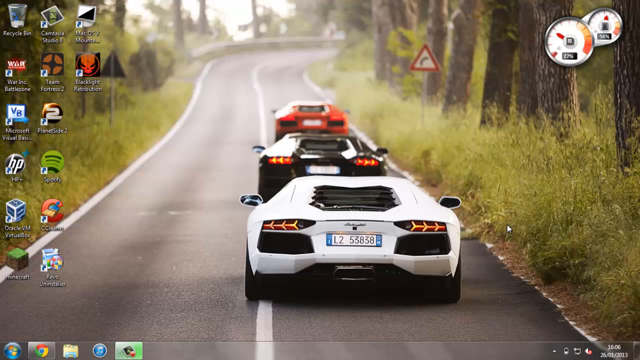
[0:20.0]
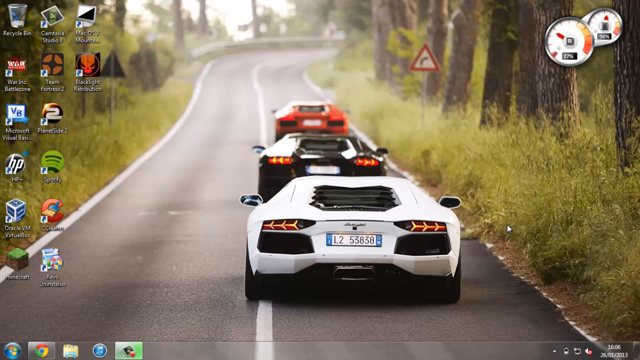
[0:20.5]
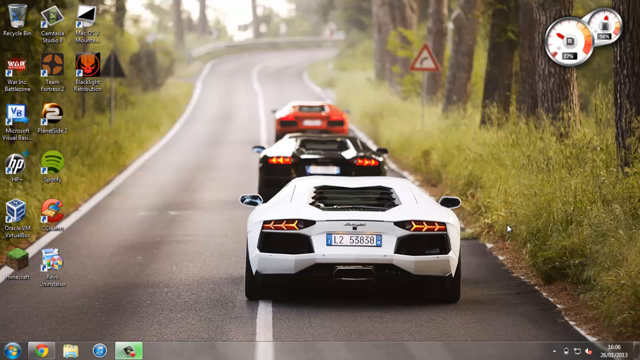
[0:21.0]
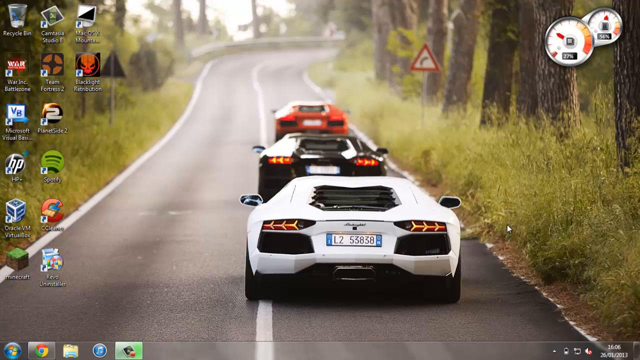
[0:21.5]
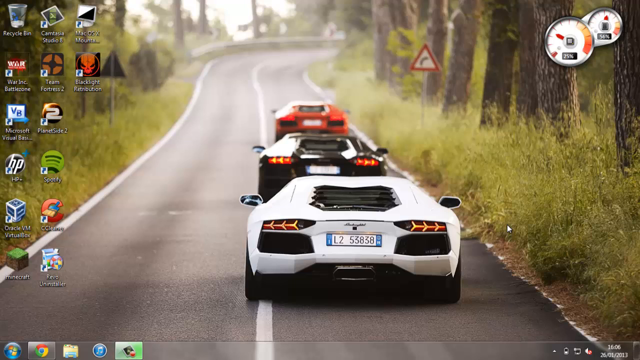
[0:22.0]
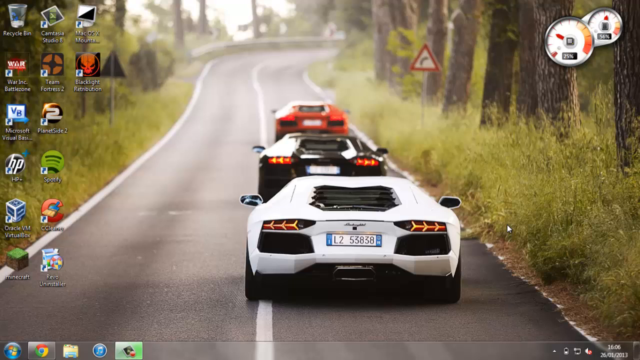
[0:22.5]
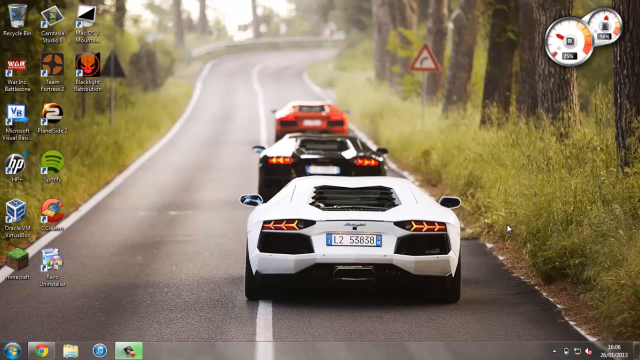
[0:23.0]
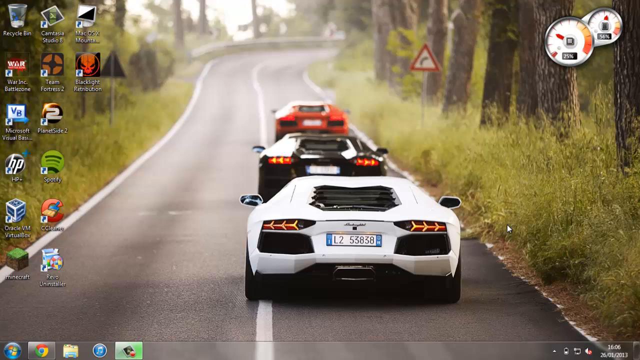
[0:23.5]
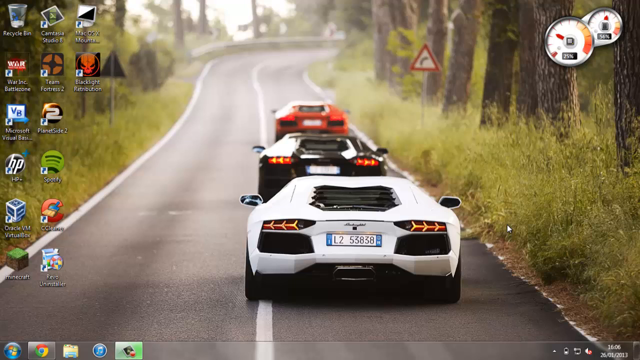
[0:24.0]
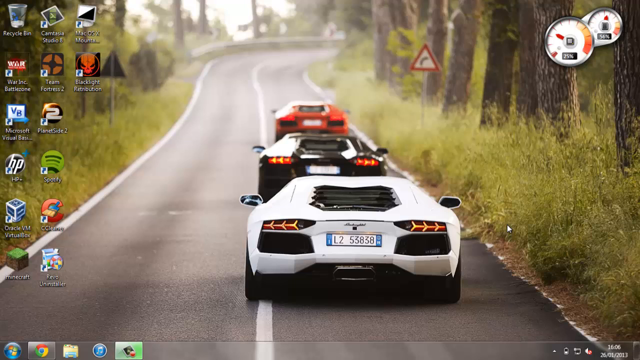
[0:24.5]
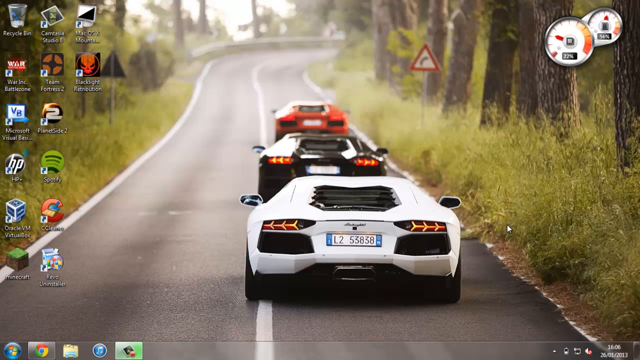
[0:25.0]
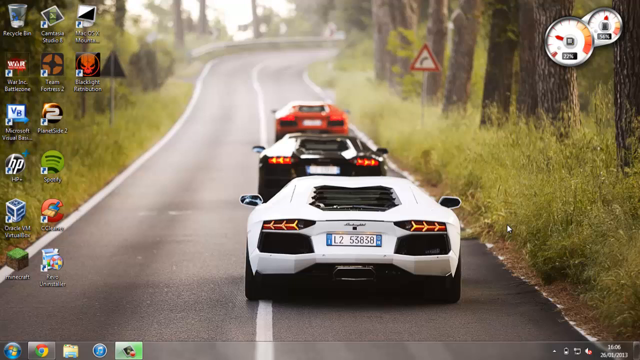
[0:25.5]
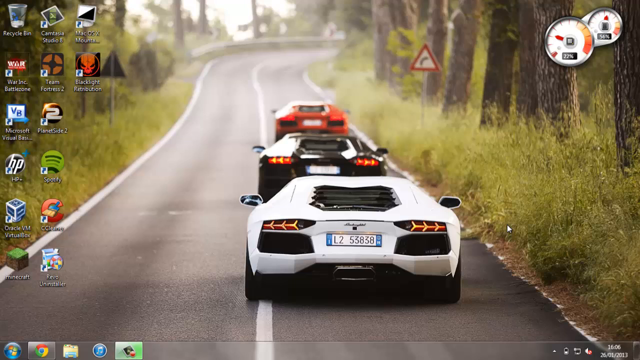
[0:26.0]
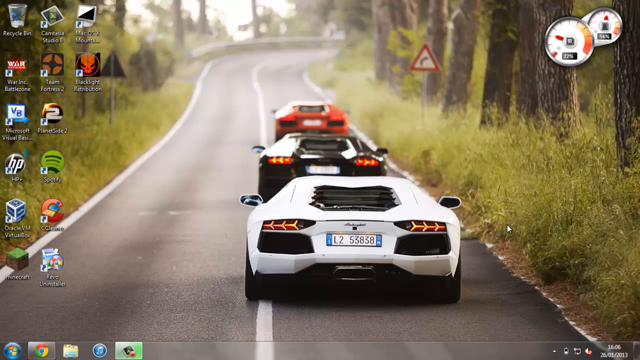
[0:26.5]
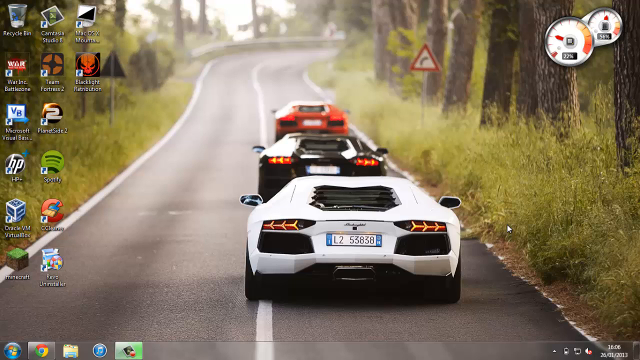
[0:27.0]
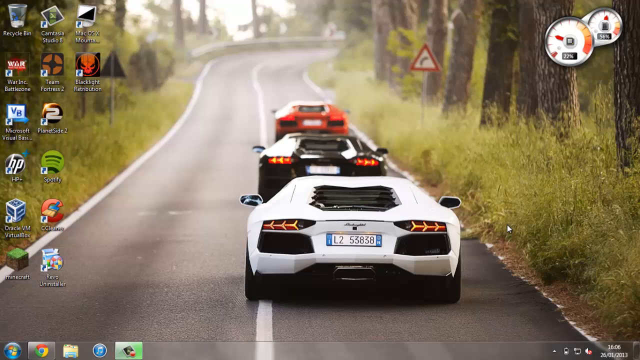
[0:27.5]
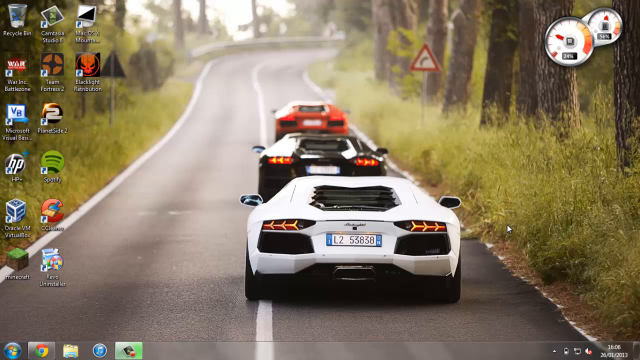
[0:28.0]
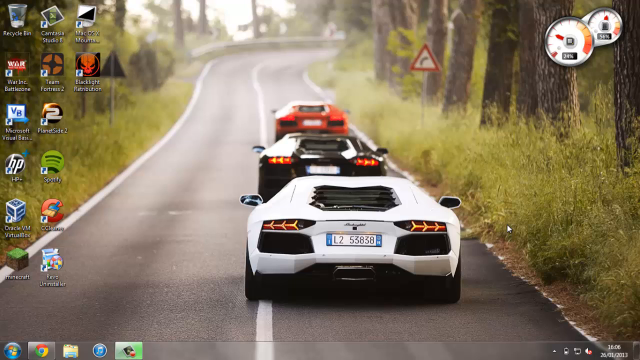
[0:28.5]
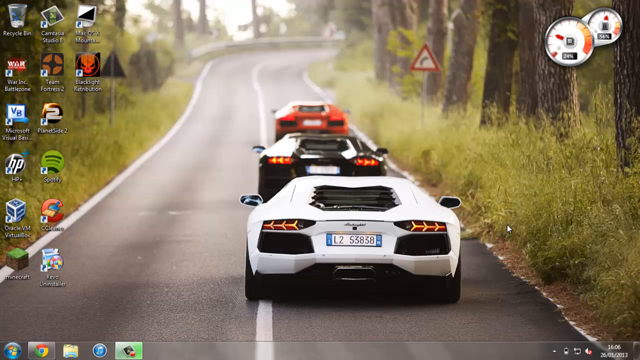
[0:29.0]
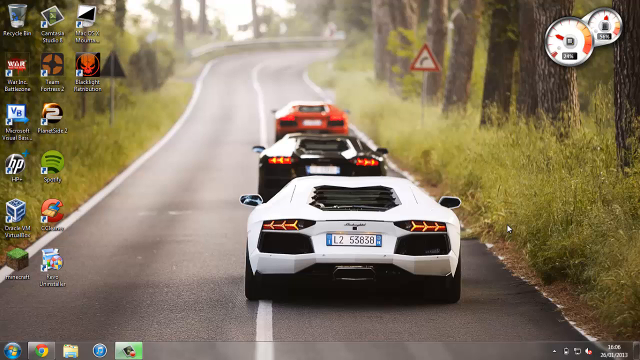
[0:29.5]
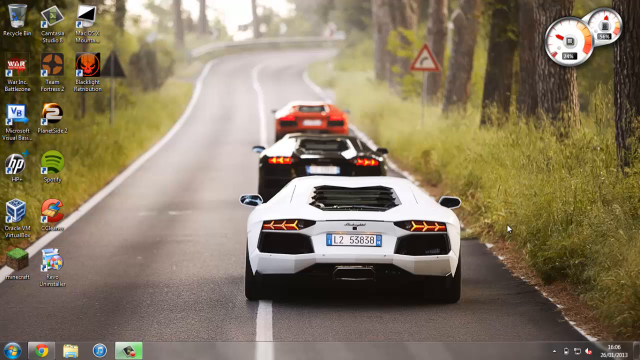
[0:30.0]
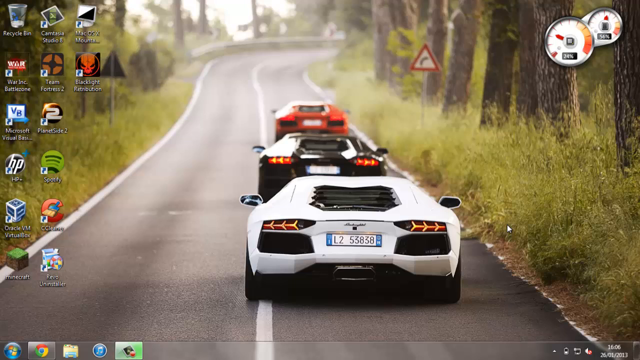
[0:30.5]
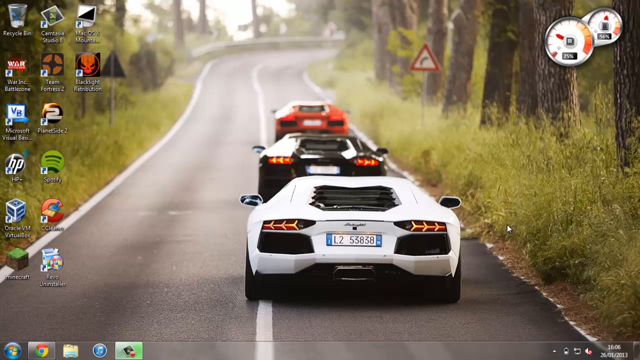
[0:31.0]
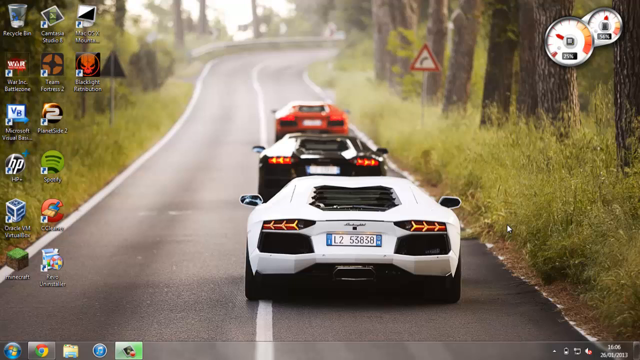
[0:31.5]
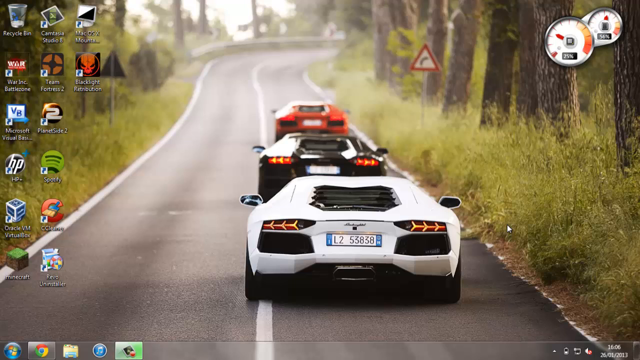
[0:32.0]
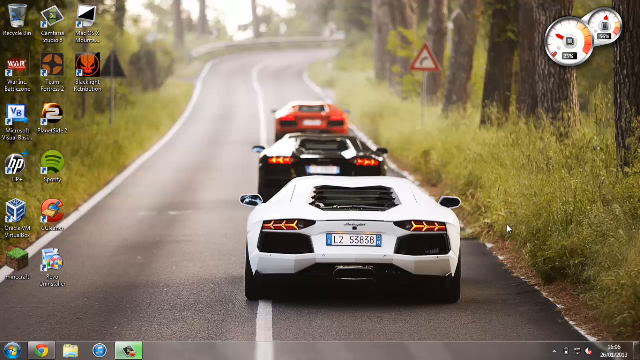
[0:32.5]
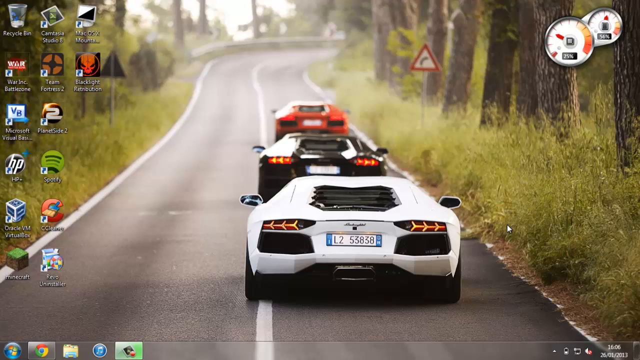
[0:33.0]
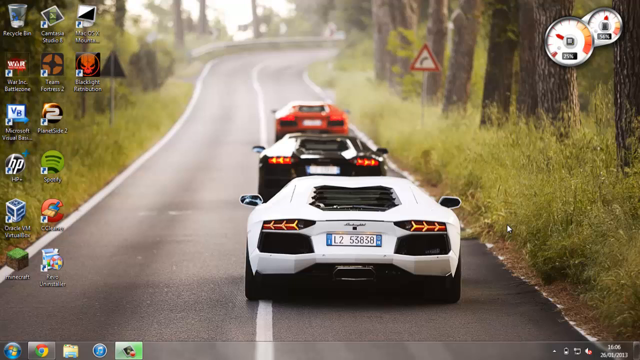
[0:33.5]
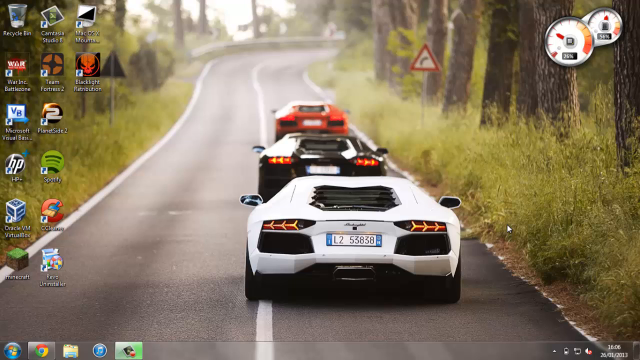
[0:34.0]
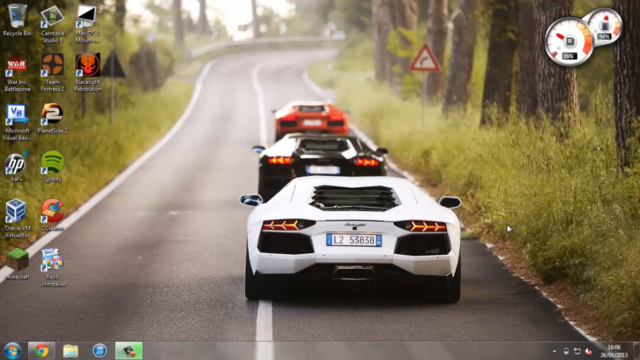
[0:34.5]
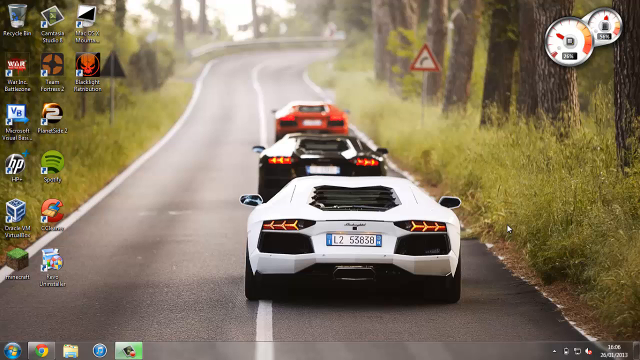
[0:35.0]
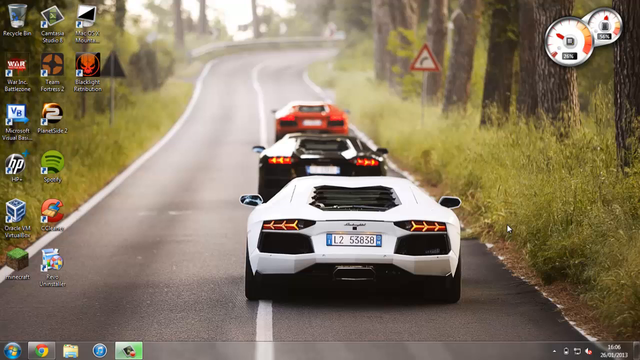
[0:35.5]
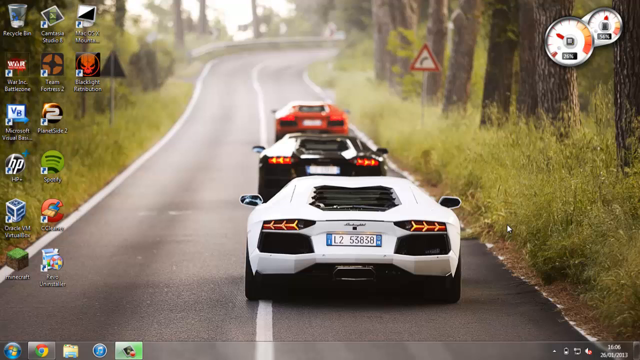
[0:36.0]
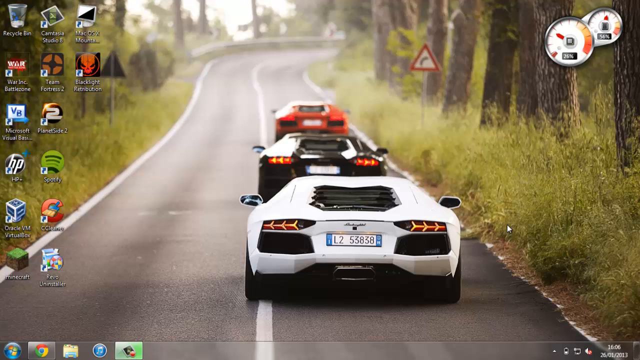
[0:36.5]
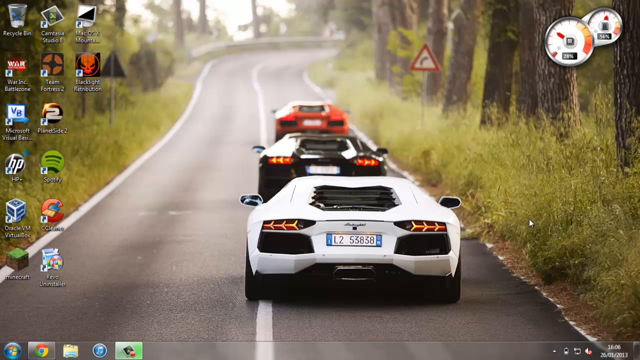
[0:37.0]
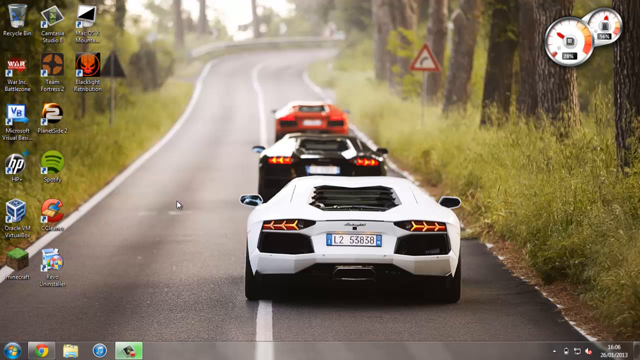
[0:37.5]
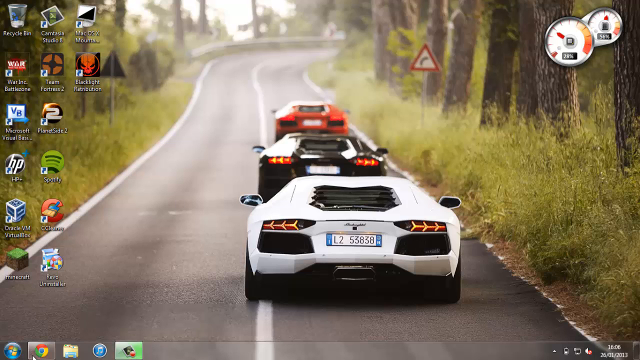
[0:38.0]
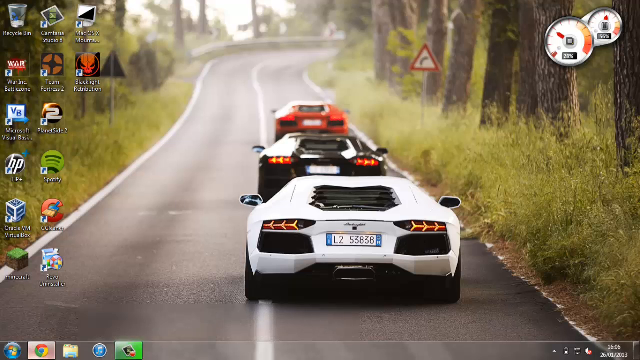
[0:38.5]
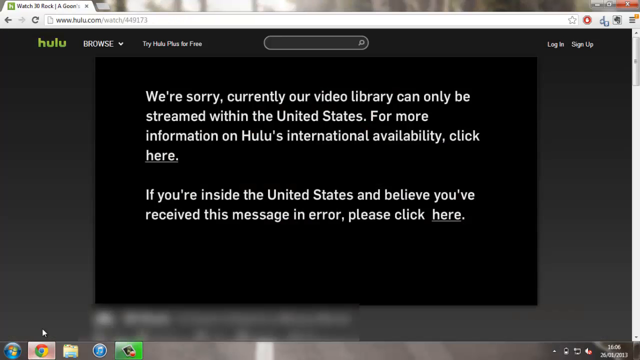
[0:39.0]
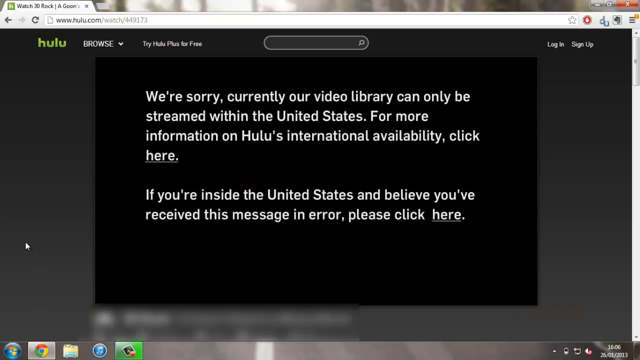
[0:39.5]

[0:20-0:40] The desktop remains on screen. The gauge apparently showing CPU use fluctuates and now reads 25%, while the other reads 56%. After 10 to 15 seconds, the mouse moves from the right side of the white car, across the car and over Revo Uninstaller, and clicks on Chrome. A Chrome window pops up with a tab titled "Watch 30 Rock" followed by cut-off text. The URL is www.hulu.com/watch/449173. The Hulu page is gray with a black box in the middle showing an error related to the user's location: the top message offers information on Hulu's international availability, and below it is a link to click if the user believes they received the message in error. At the top of the page are the green hulu logo, a browse drop-down button and a message saying "Try Hulu Plus for free". To the right, near the middle, is a search bar, and at the far right are log in and sign up buttons.